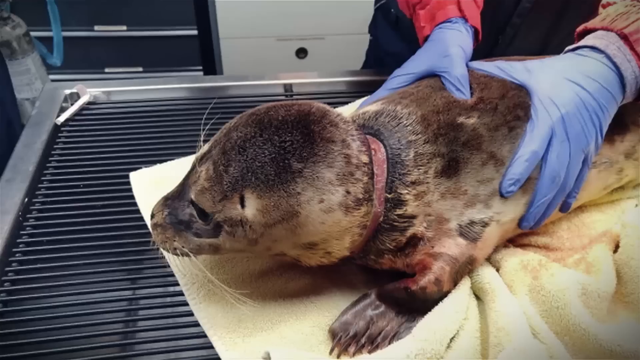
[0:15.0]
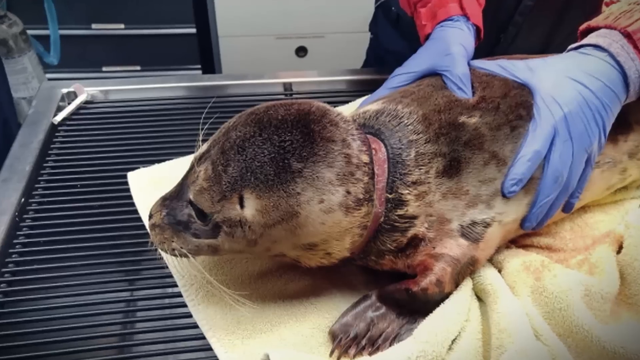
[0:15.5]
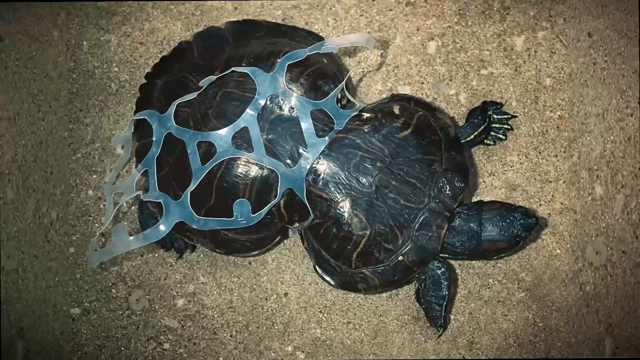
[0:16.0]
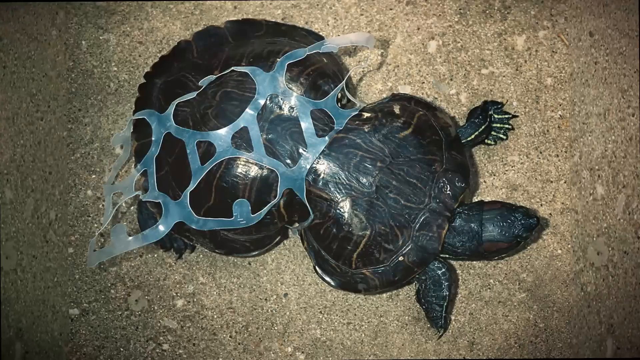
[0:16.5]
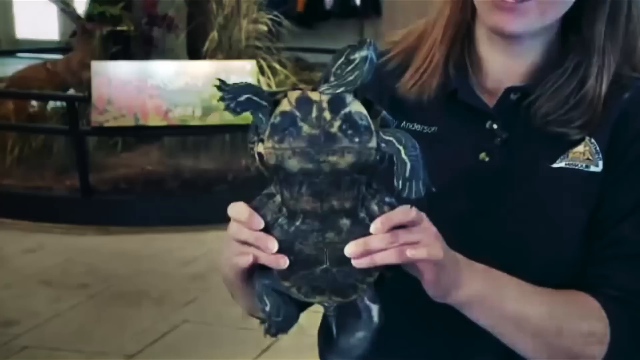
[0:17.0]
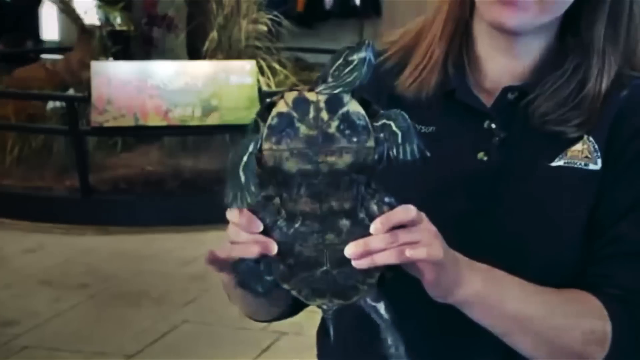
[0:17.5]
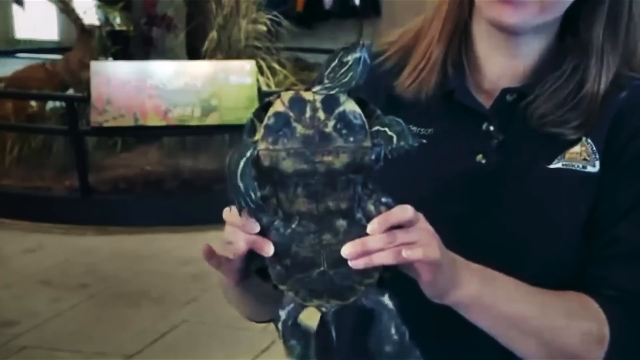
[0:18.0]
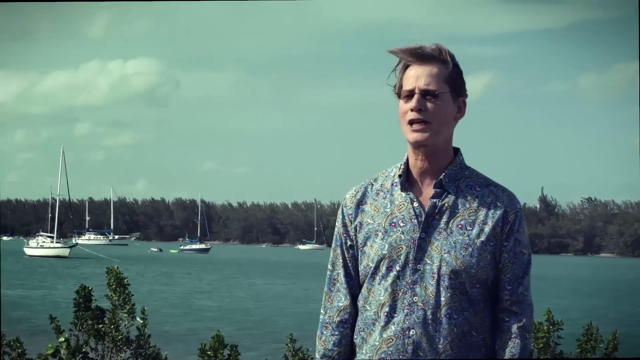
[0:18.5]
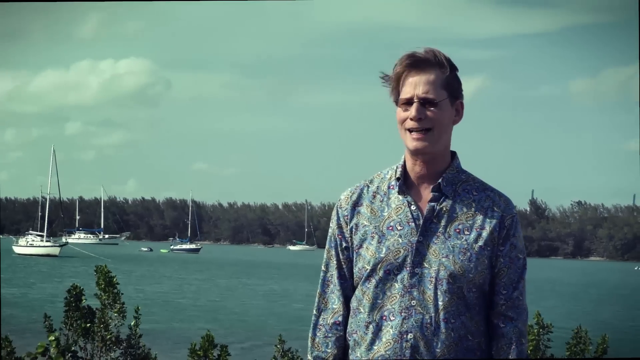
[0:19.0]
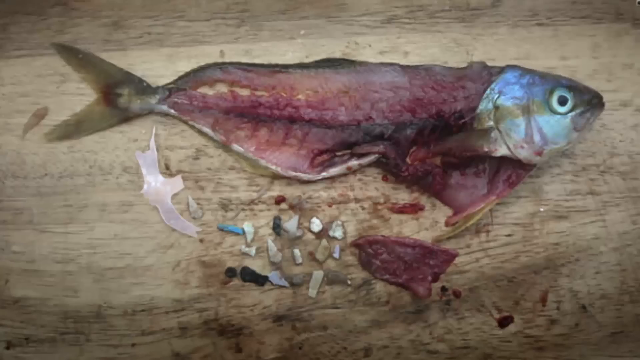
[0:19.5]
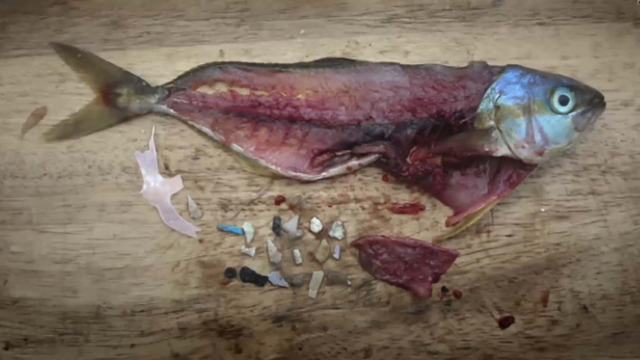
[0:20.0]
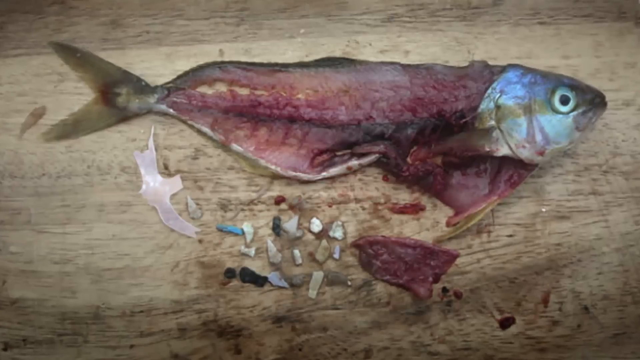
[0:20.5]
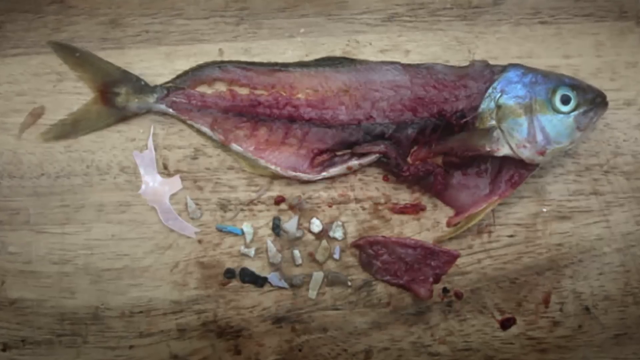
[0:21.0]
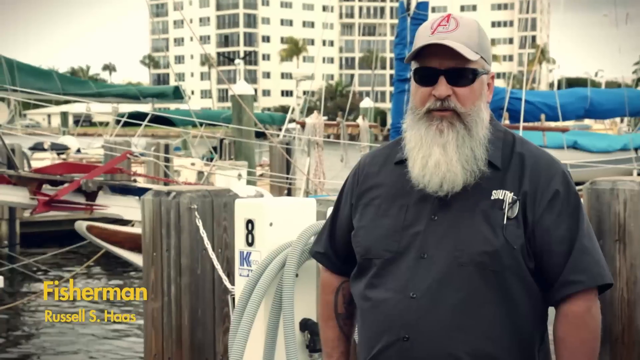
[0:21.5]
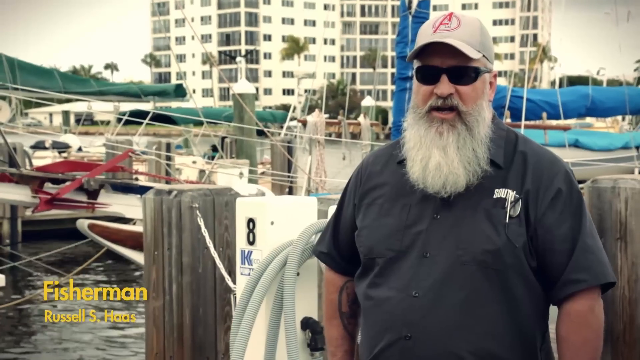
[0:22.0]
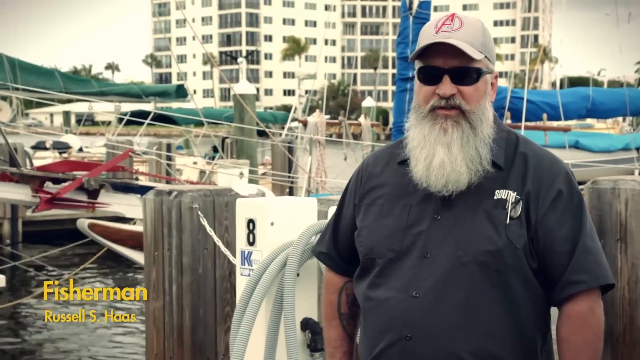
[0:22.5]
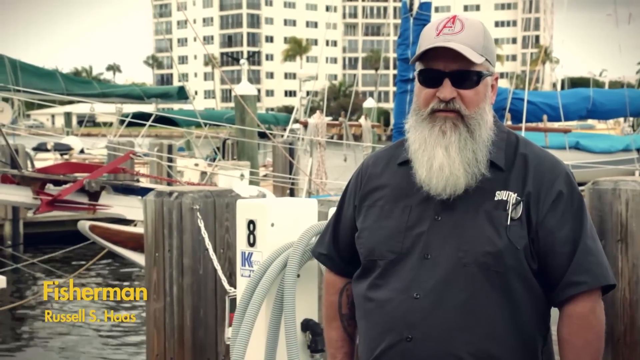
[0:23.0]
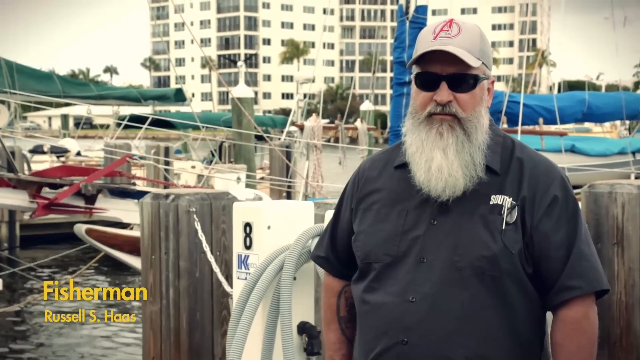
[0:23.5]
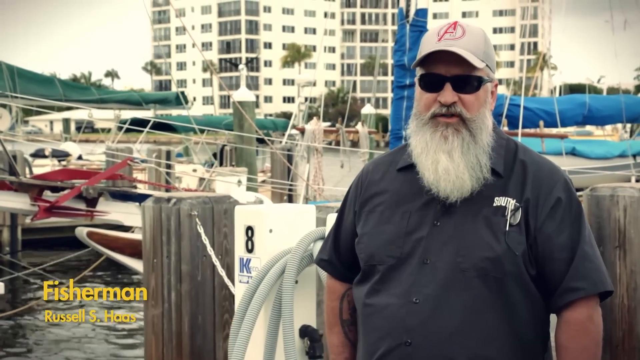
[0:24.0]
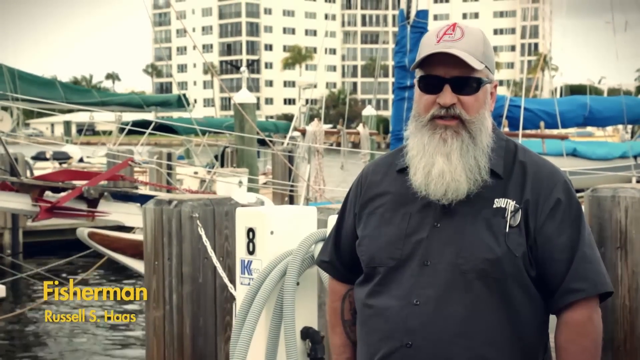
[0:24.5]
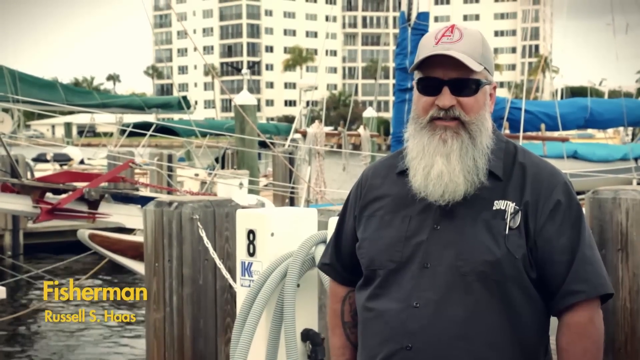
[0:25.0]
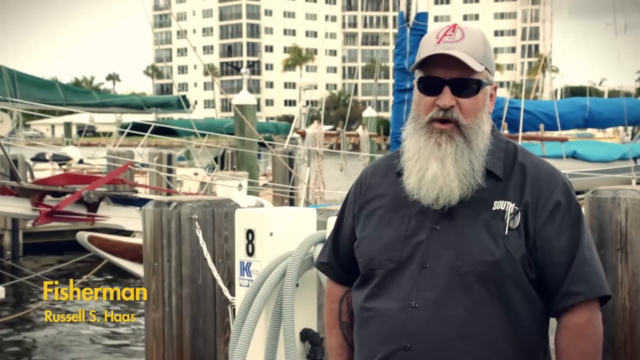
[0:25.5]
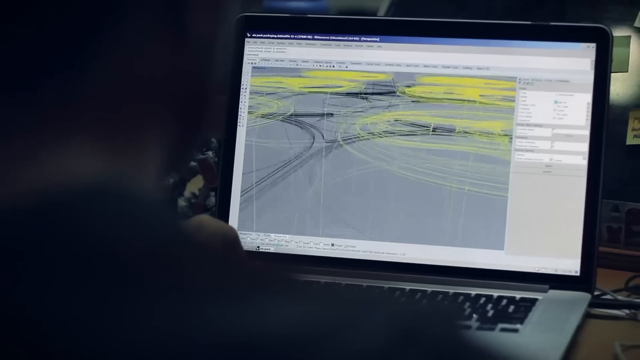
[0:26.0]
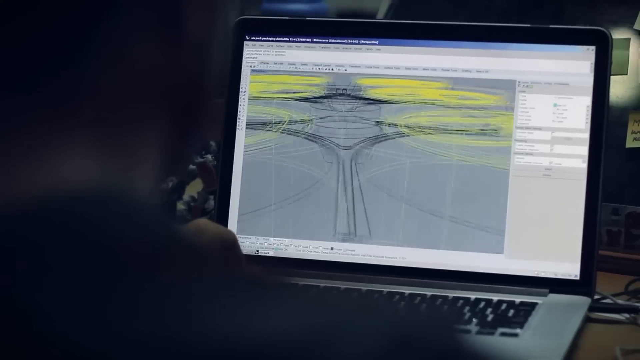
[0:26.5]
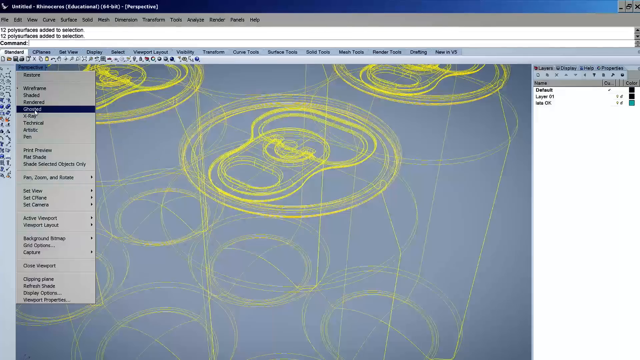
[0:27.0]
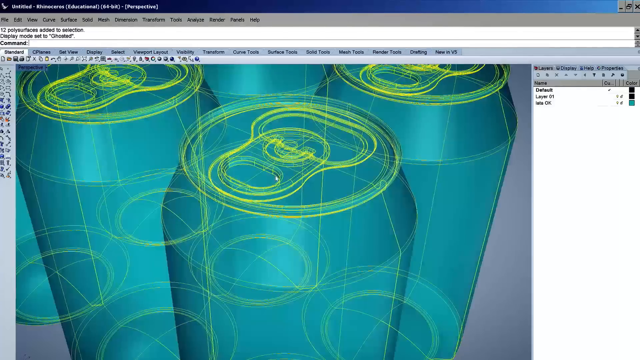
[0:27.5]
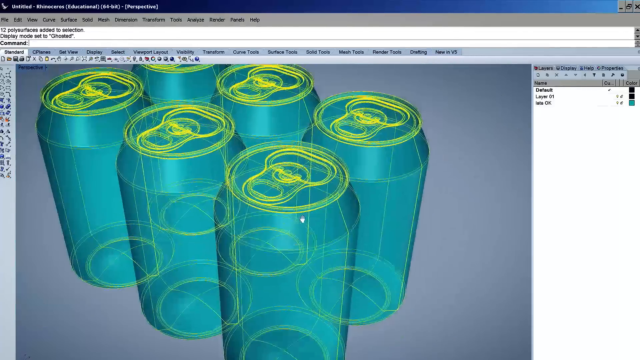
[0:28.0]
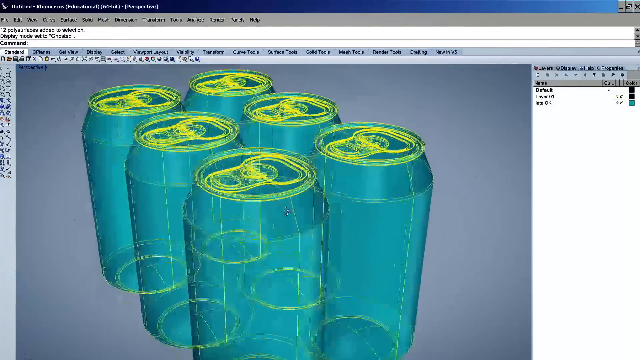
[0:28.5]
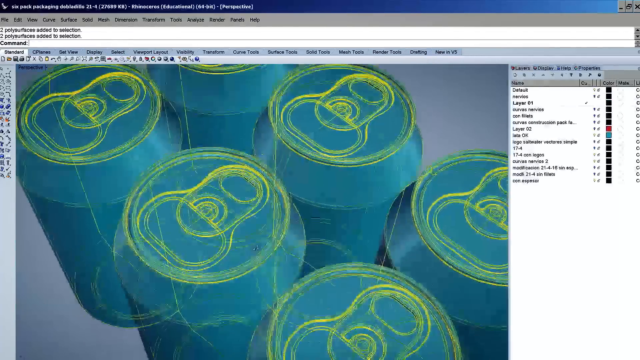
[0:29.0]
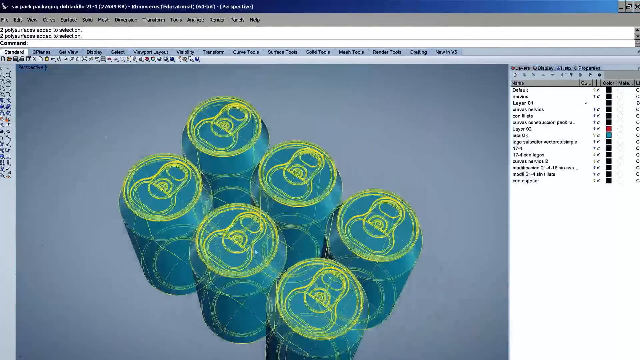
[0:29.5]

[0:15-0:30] Footage shows the damage being done to animals. A fisherman with a hat and a beard talks, and he is seen in what looks like a CAD program making mock-ups of beer. In the documentary-style footage, some people are in the background talking. The setting changes about three times.